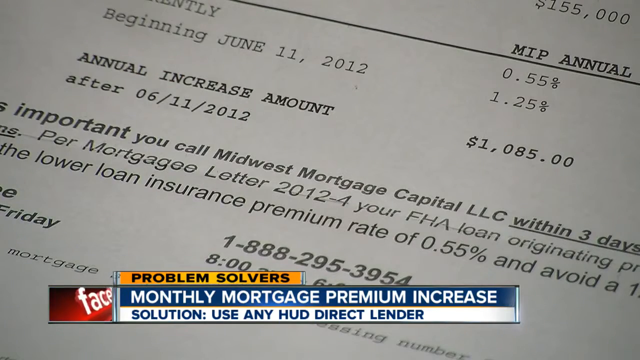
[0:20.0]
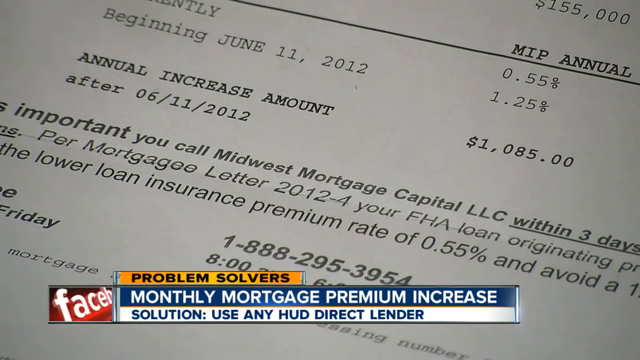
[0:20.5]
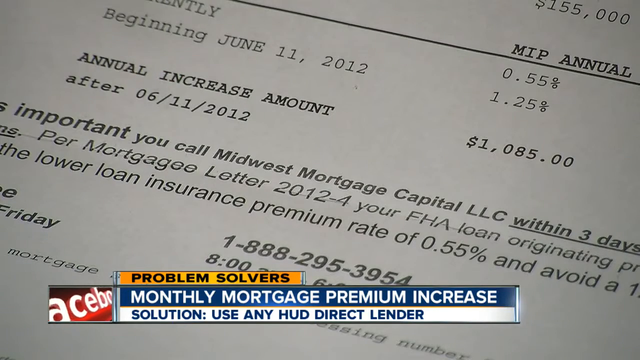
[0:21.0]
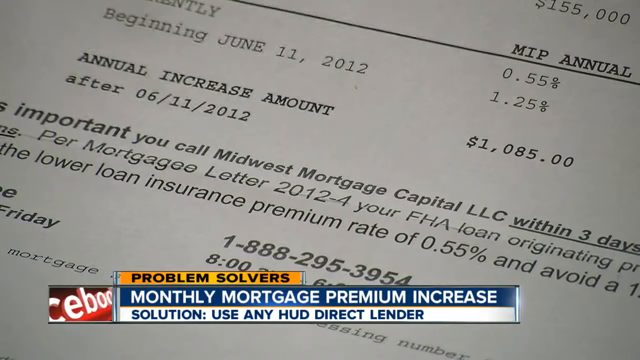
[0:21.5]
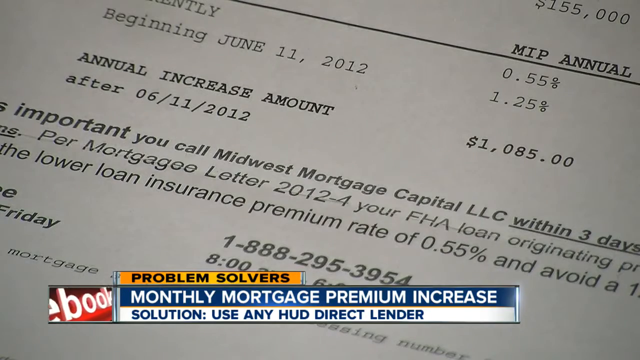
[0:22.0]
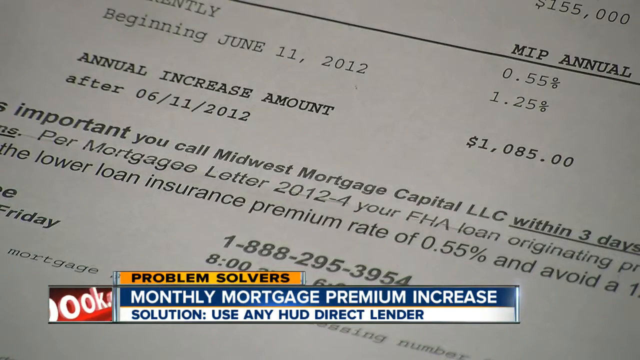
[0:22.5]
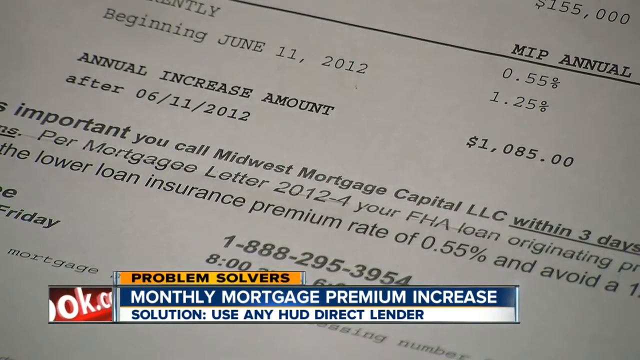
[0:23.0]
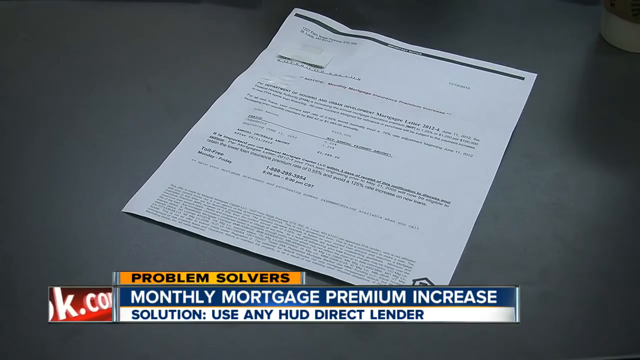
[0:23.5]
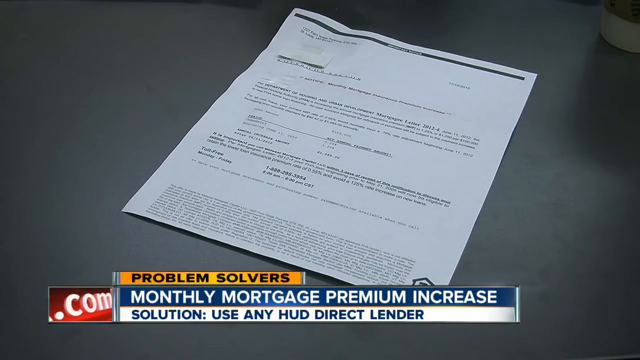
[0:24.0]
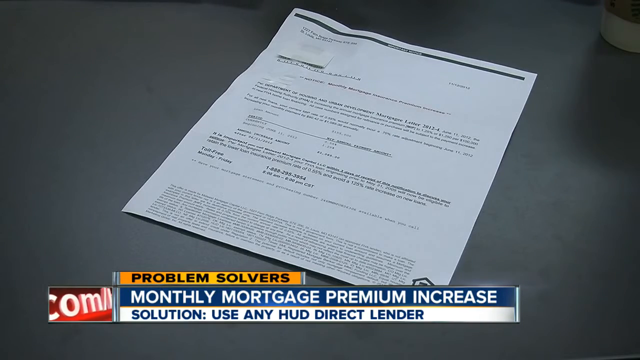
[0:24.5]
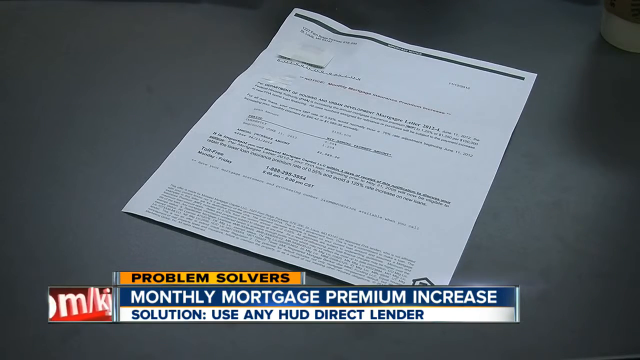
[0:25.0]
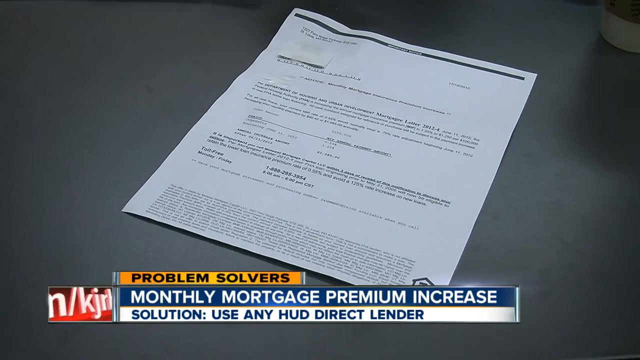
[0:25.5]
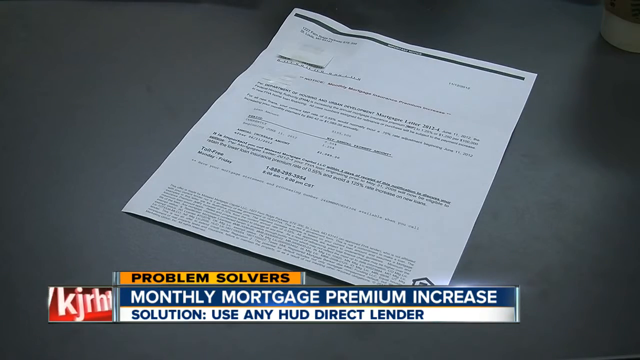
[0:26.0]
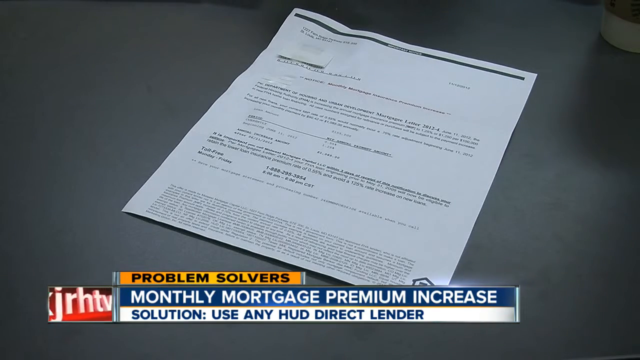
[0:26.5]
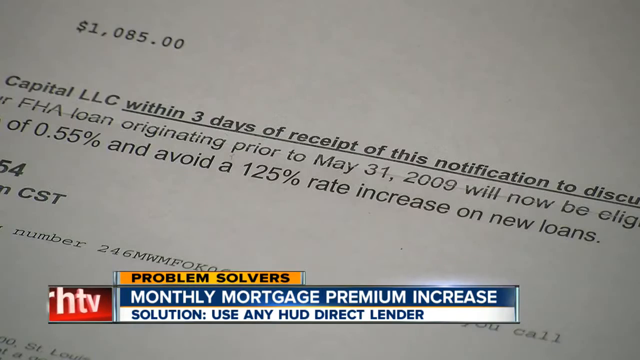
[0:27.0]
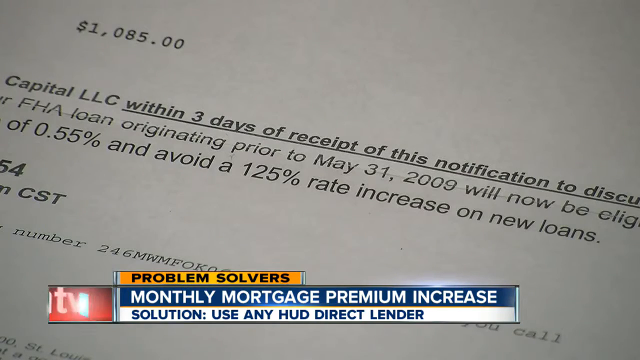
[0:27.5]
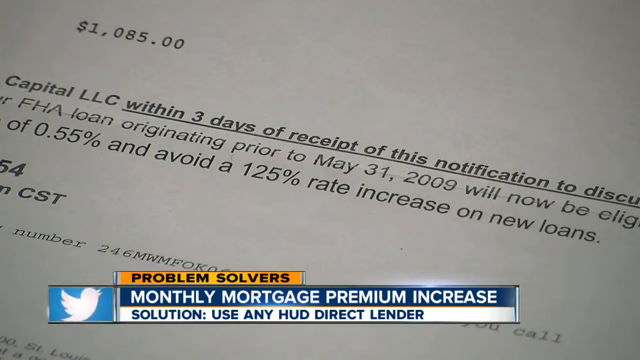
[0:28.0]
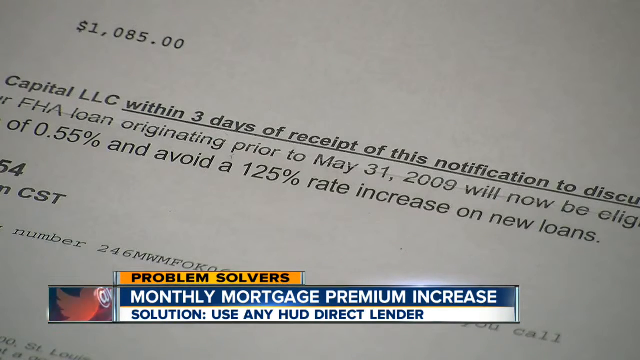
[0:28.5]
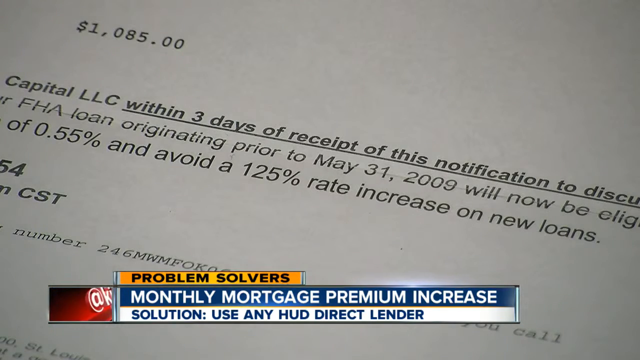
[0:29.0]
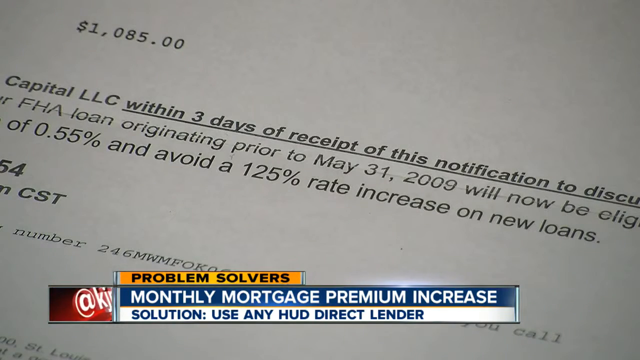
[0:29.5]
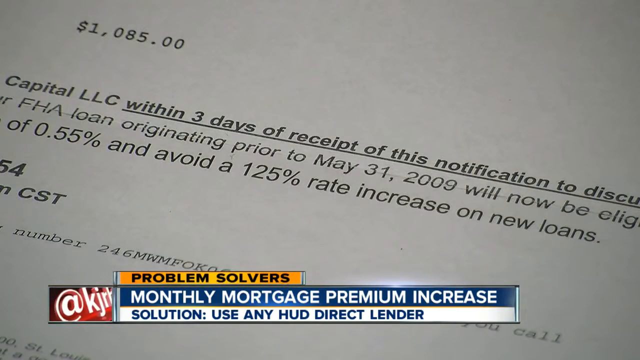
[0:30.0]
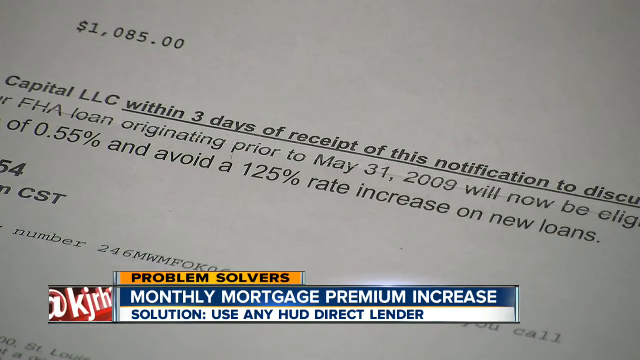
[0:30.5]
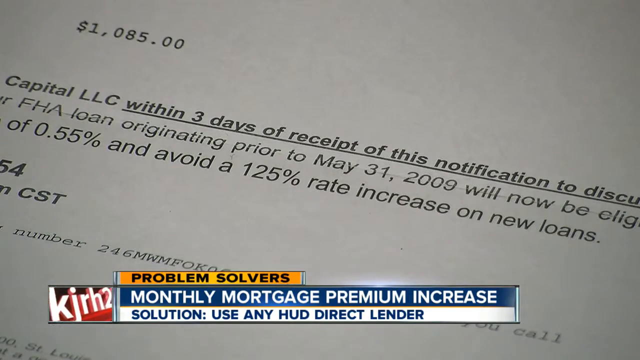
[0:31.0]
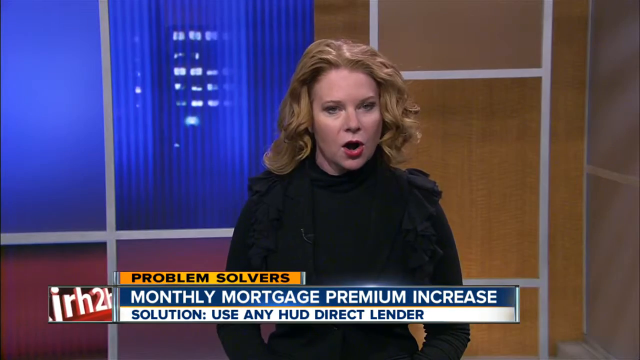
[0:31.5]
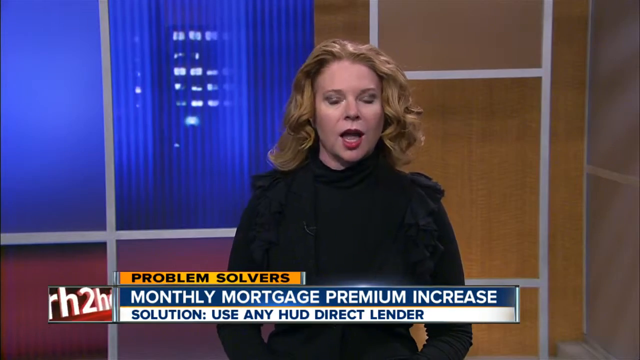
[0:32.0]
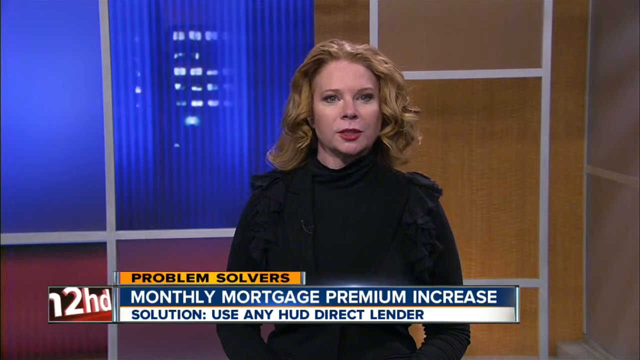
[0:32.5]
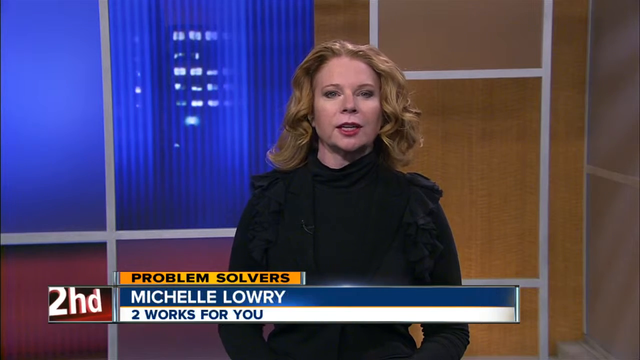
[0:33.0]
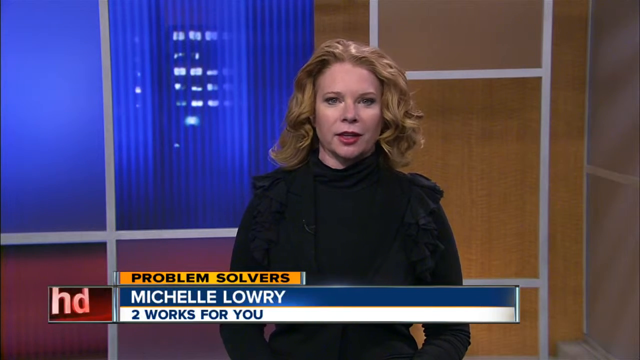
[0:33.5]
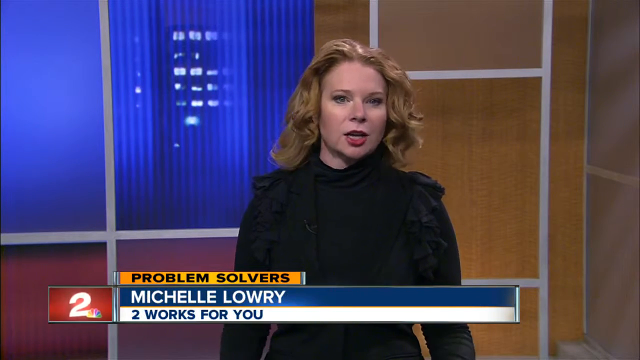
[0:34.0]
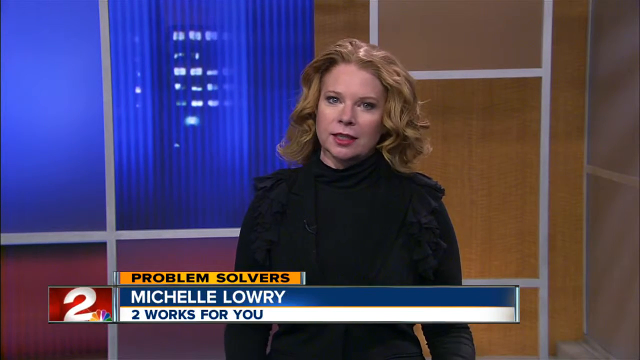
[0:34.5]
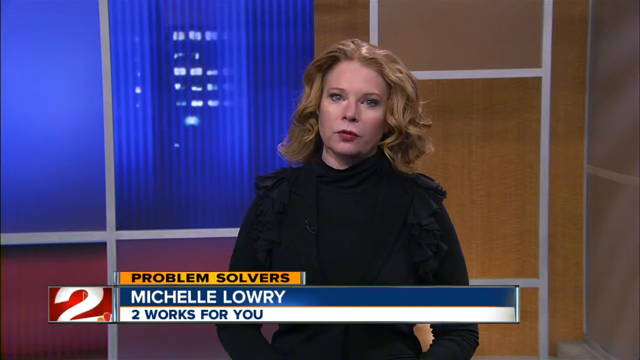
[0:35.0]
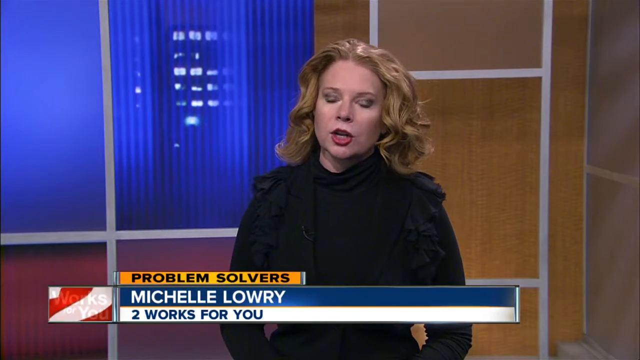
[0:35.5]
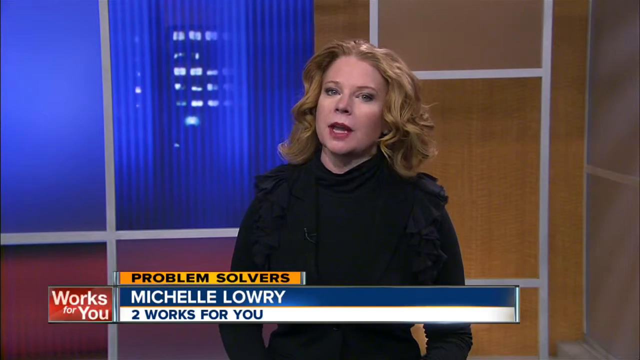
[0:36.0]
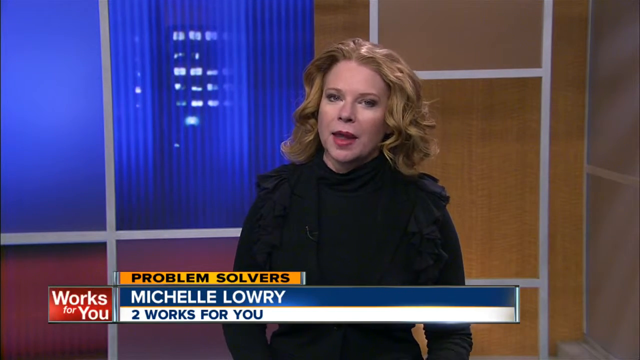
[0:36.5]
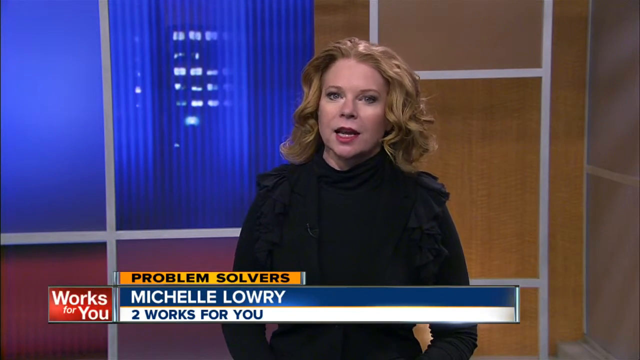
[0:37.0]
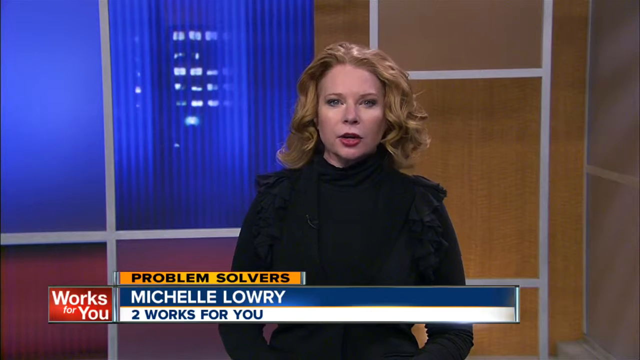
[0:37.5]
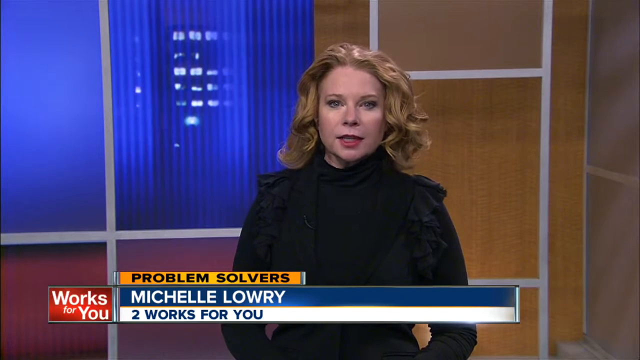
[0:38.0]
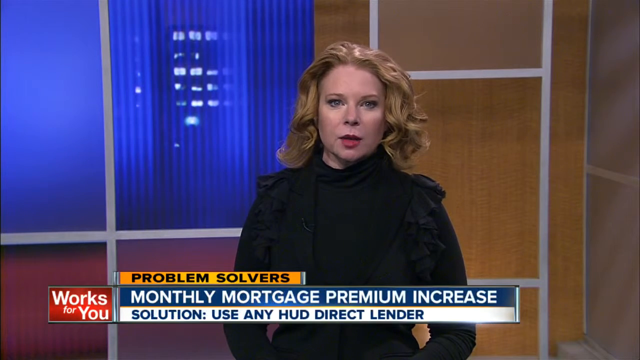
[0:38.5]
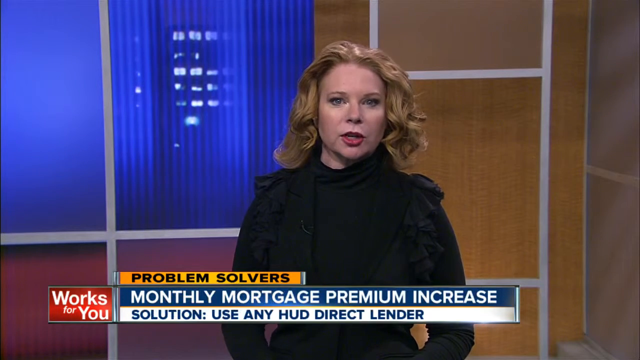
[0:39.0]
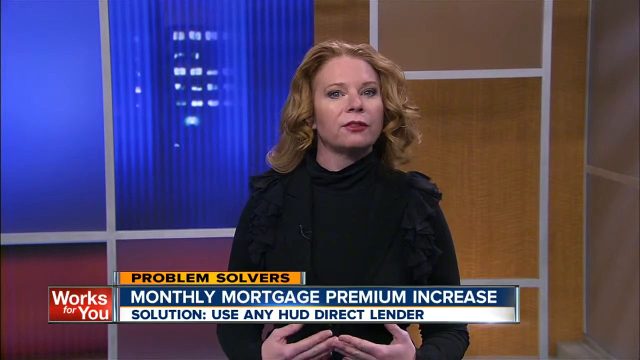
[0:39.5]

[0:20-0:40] The news broadcast about monthly mortgage premium increases shows an example of a notice that someone received about the premium increase. Underneath the topic on the screen, a solution is written in dark blue letters: use any HUD Direct Lender. The video then cuts to a woman anchor with strawberry blonde hair wearing a black blouse. Her name is on the screen and seems to be Michelle Lowry, and underneath her name is a channel slogan that says "two works for you." The segment title "Problem Solvers" has been on the screen throughout the video.